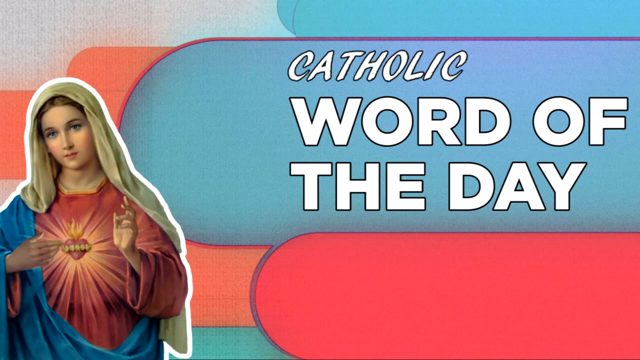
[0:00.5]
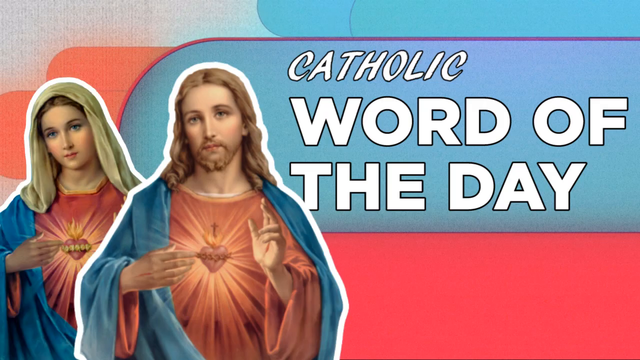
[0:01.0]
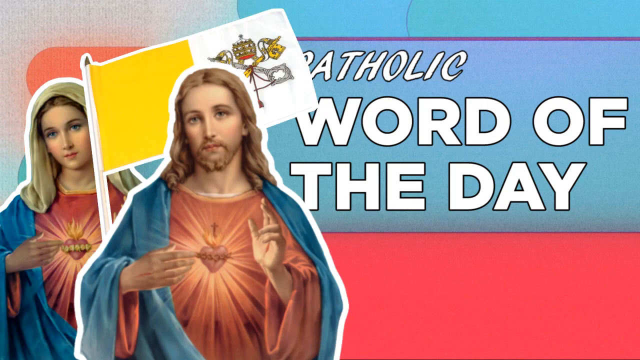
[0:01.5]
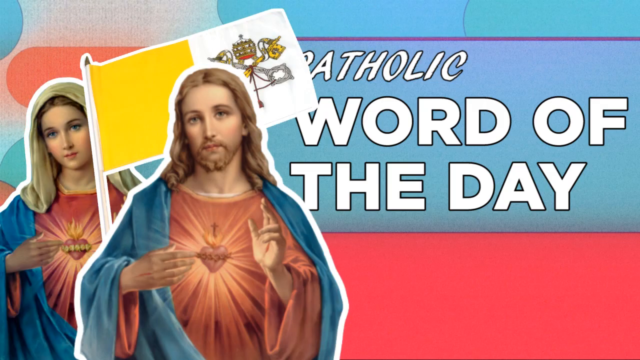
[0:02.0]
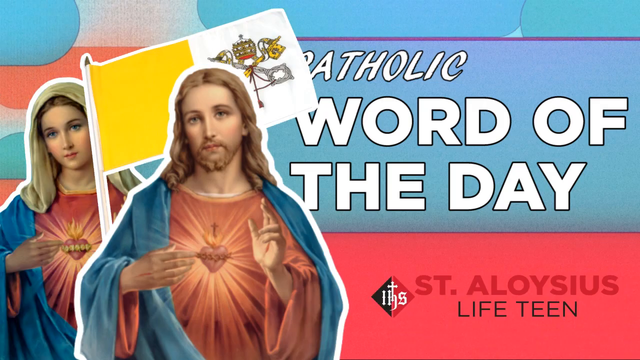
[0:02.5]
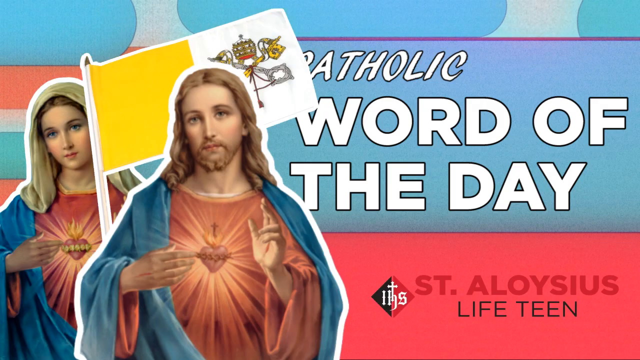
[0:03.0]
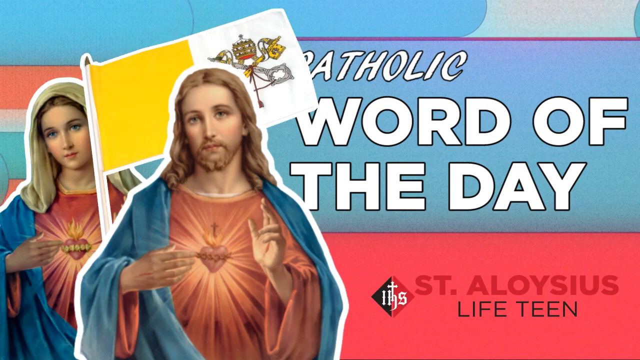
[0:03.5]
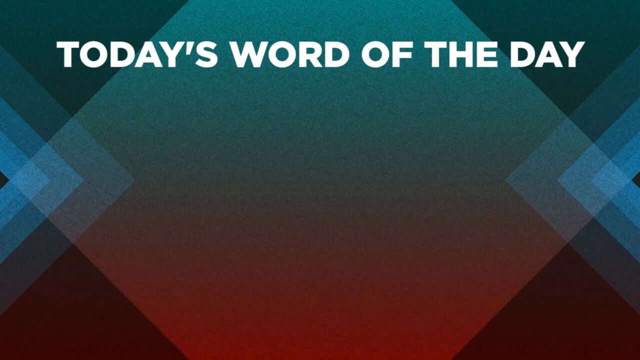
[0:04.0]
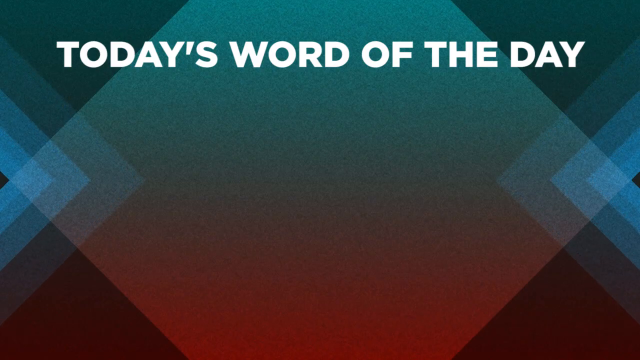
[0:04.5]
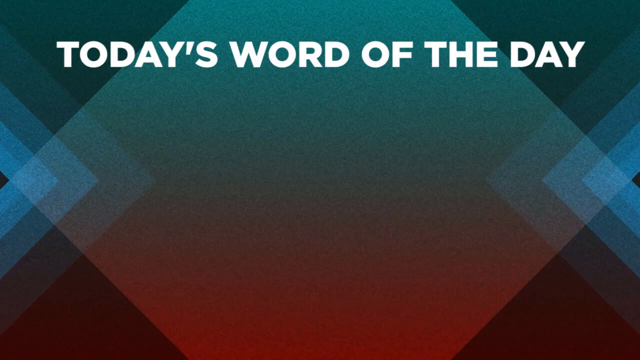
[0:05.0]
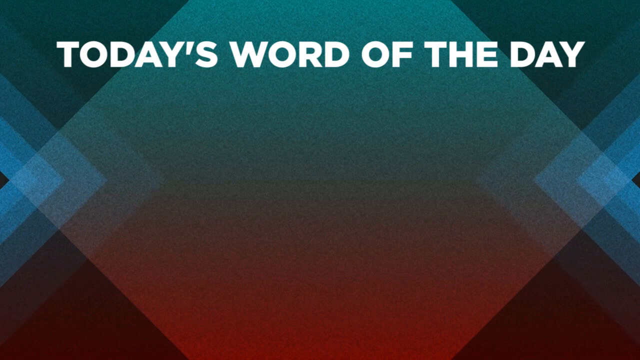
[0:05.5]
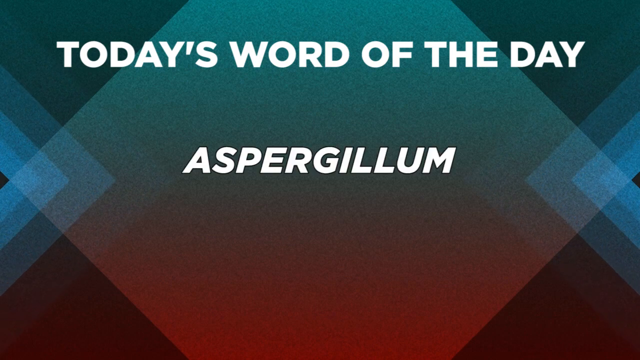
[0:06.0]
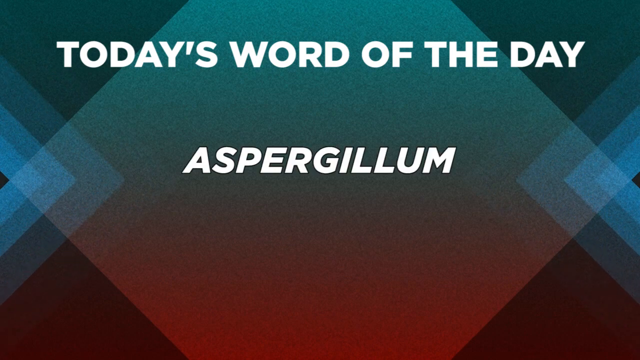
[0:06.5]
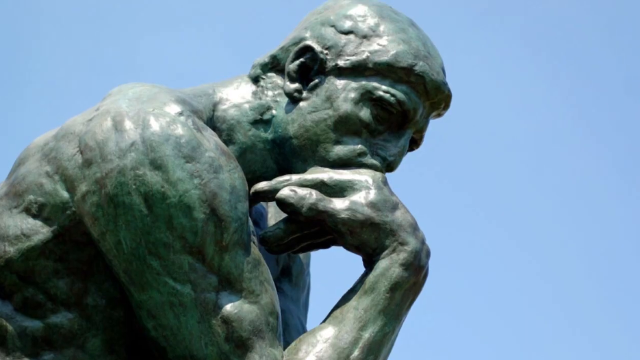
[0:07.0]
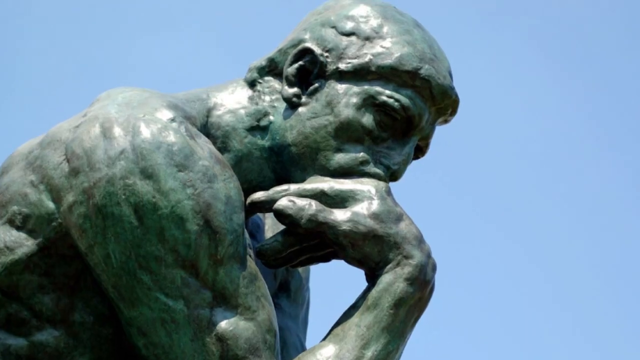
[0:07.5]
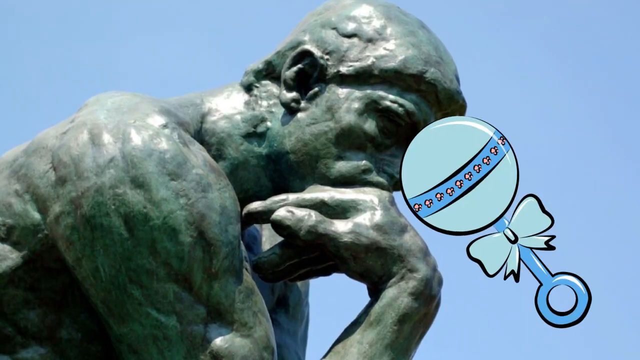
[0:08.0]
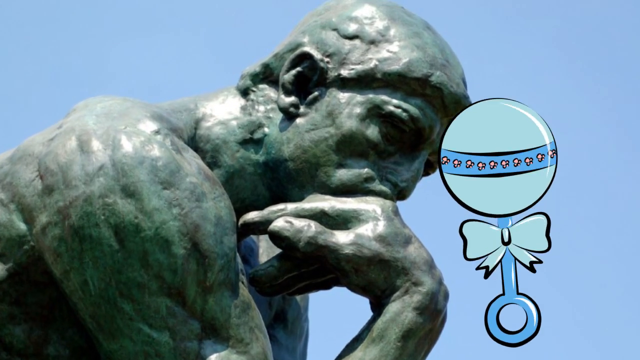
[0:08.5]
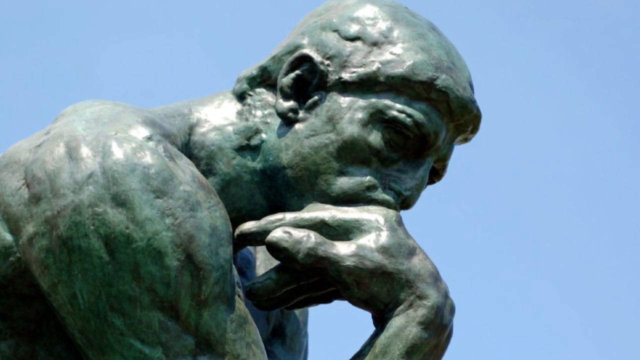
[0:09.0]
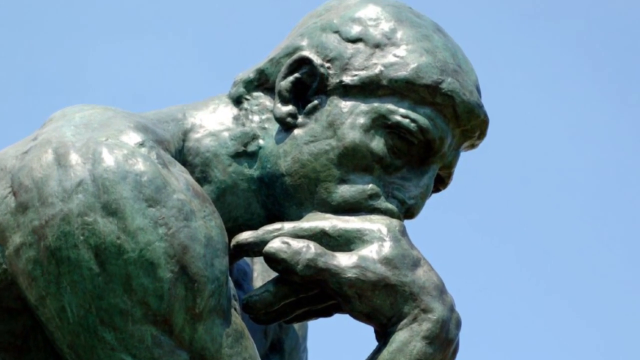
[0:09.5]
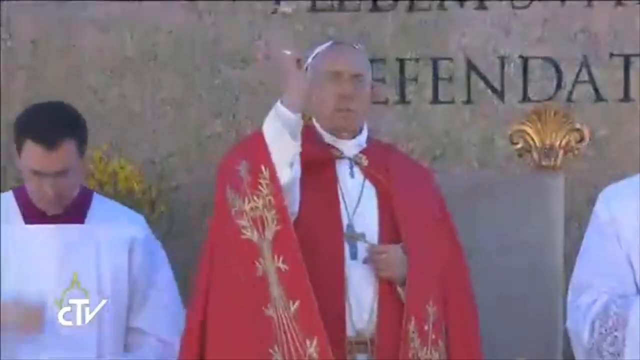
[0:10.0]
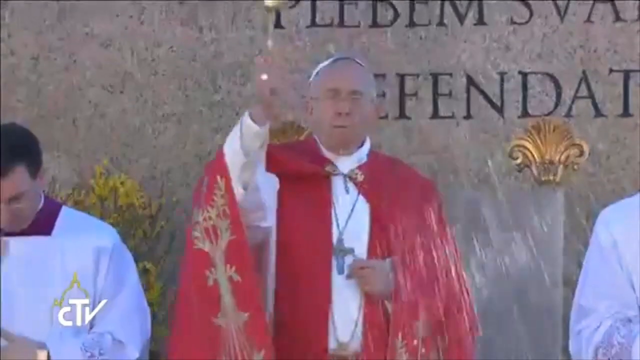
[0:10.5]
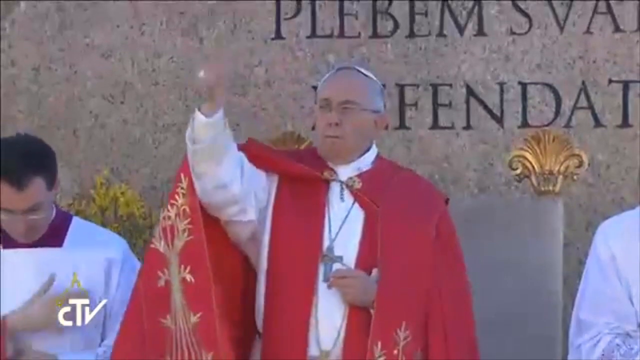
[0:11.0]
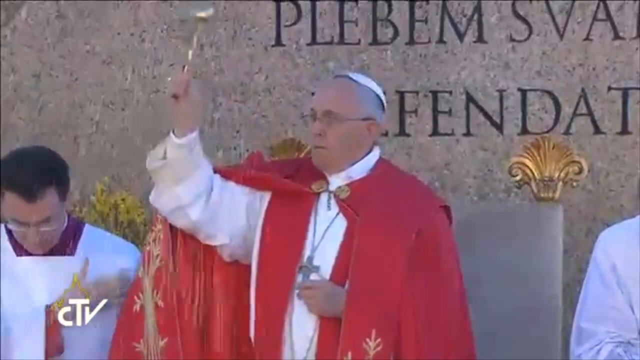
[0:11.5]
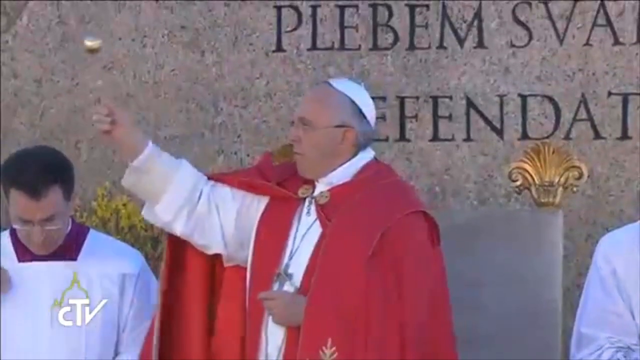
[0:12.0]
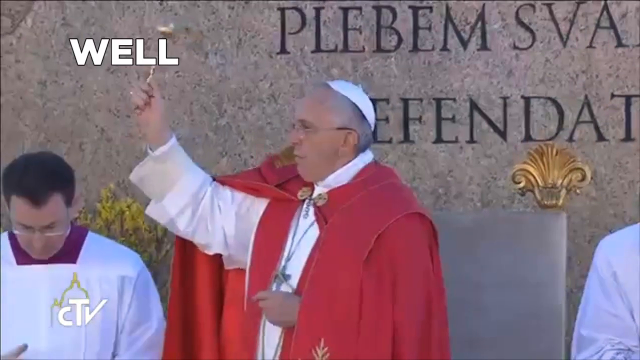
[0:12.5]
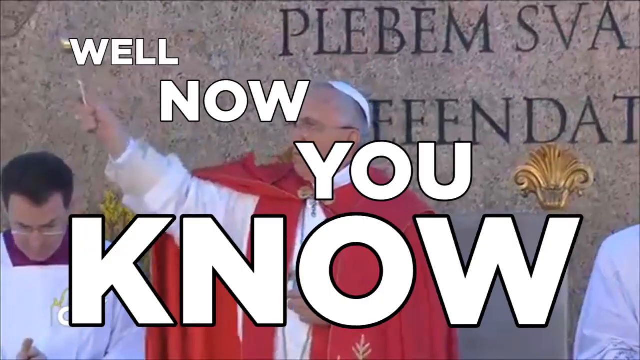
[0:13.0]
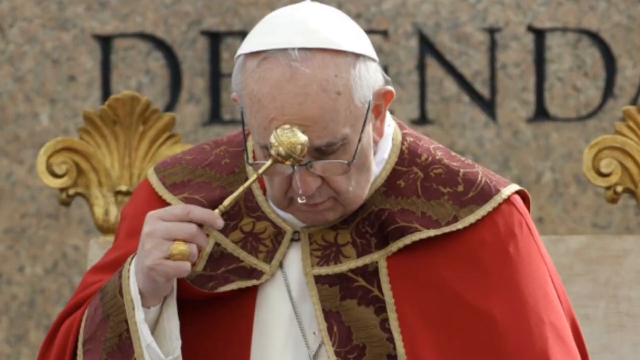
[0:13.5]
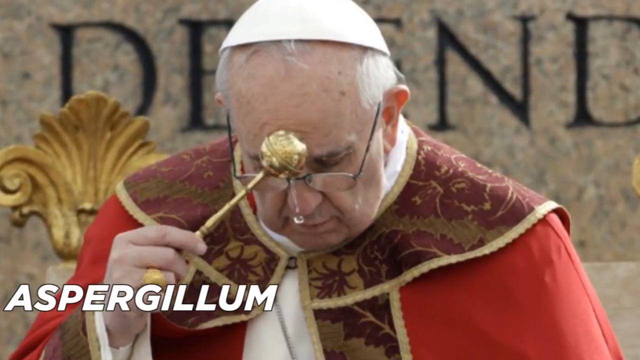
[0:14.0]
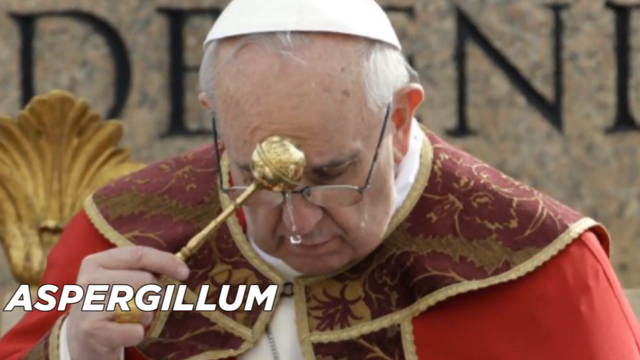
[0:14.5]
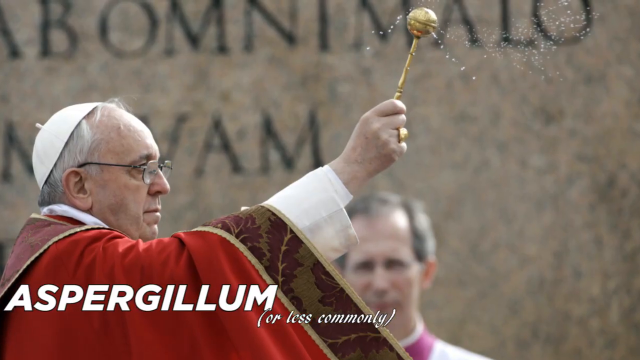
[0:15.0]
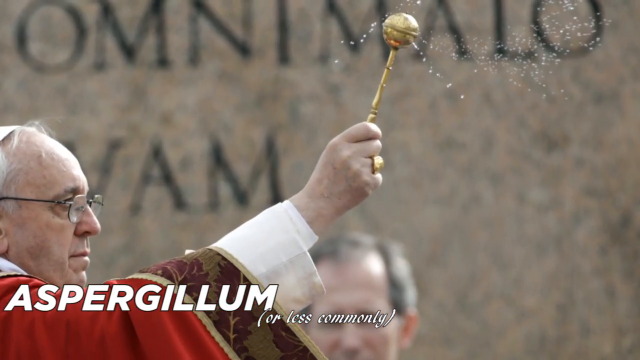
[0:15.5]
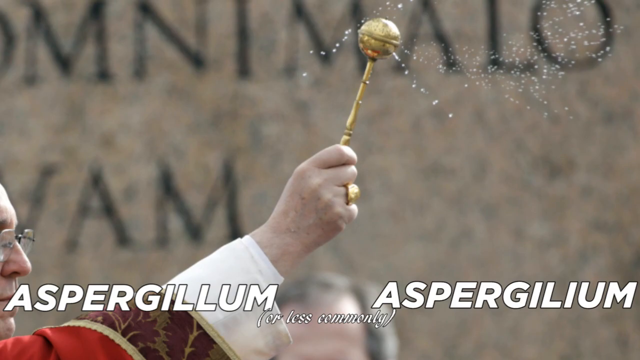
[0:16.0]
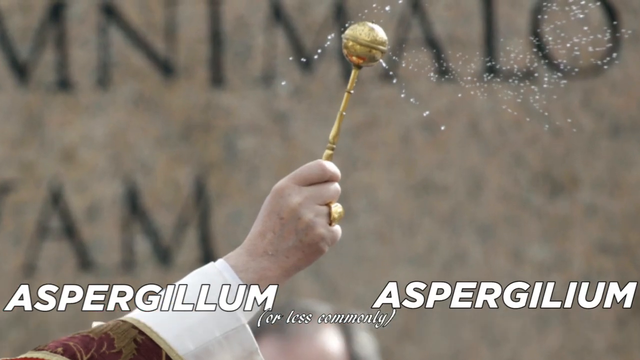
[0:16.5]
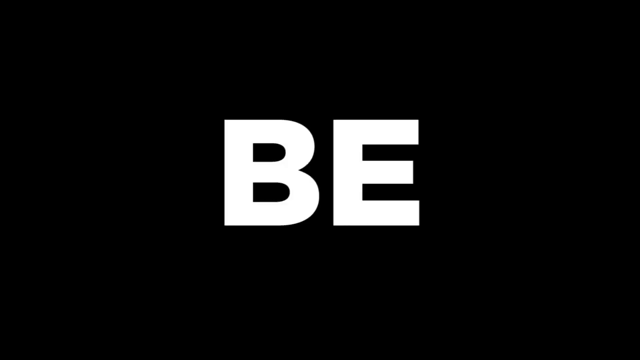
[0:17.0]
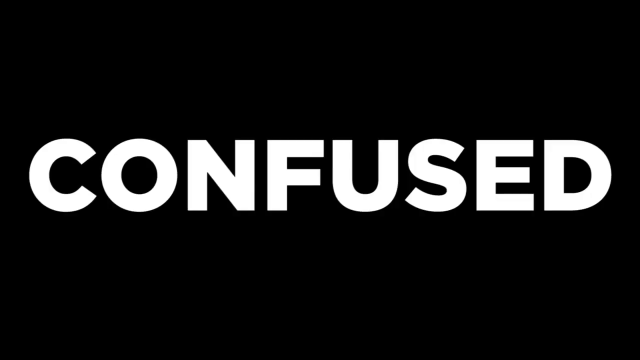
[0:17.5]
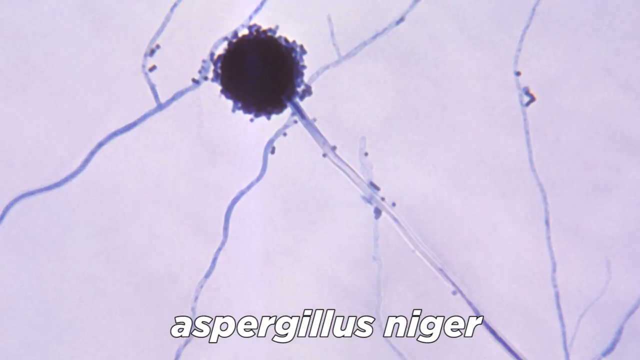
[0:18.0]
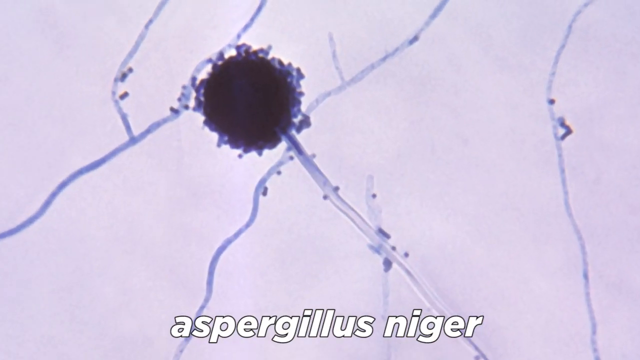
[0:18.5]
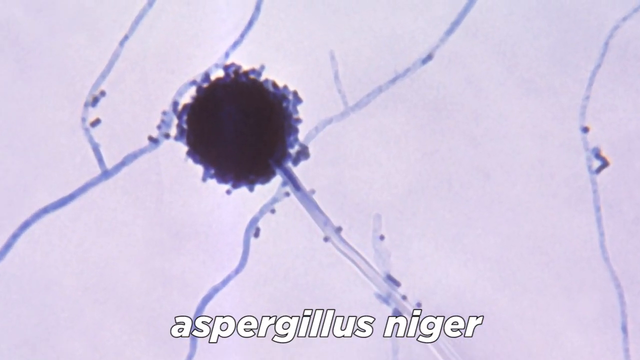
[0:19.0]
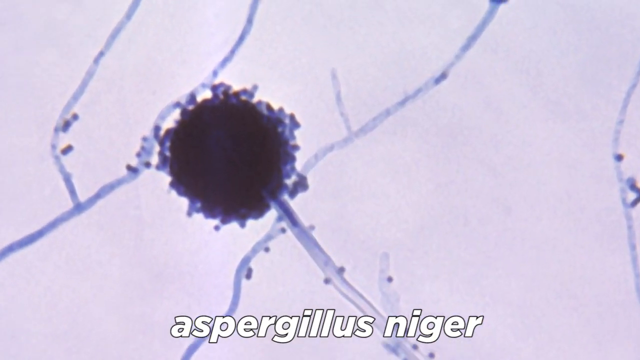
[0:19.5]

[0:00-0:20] The video opens on a screen that says "Catholic Word of the Day." On the left is what appears to be Saint Mary, along with a depiction of Jesus. A yellow and white flag with some keys appears, and in the right corner is Saint Aloysius Lifetine. The words "Today's word of the day, aspergillum" appear. A green marble statue with its hand on its chin, thinking, is shown, and in the right corner is a baby's shaker. A video clip shows a priest throwing liquid or anointing oil with this aspergillum onto the crowd. He wears a red priest garment, and behind him are some other men in white. Text at the bottom says "Well, now you know, aspergillum, or less commonly, aspergillium, not to be confused with aspergillus niger." A picture of a woman blowing her nose follows.